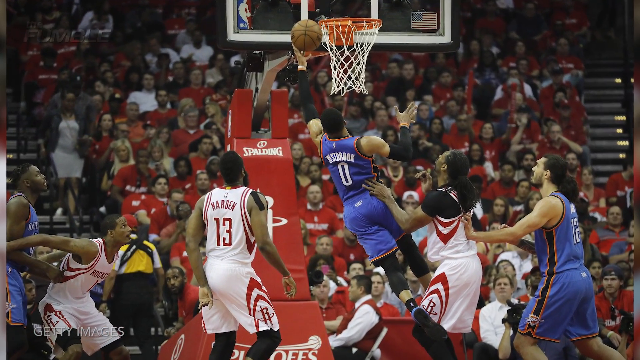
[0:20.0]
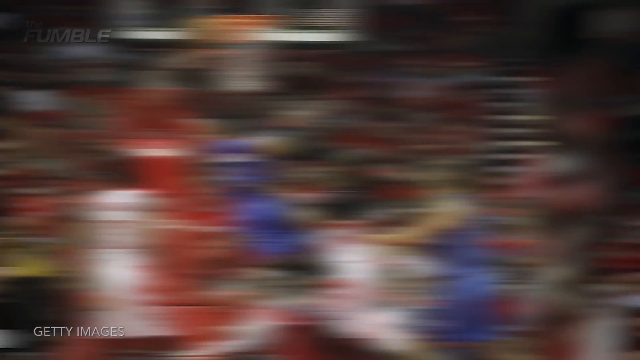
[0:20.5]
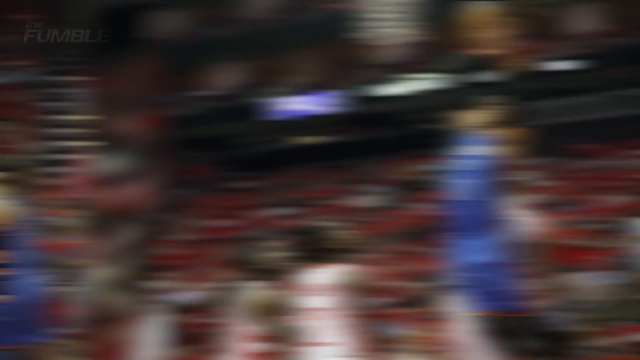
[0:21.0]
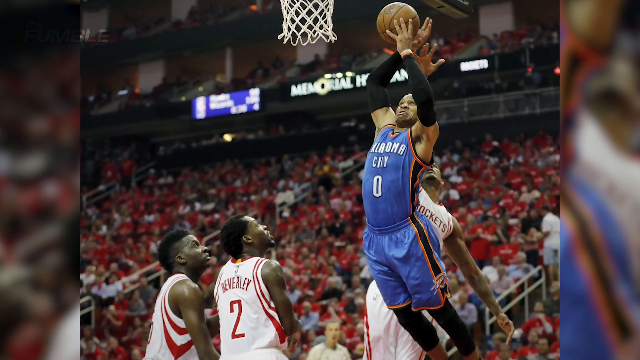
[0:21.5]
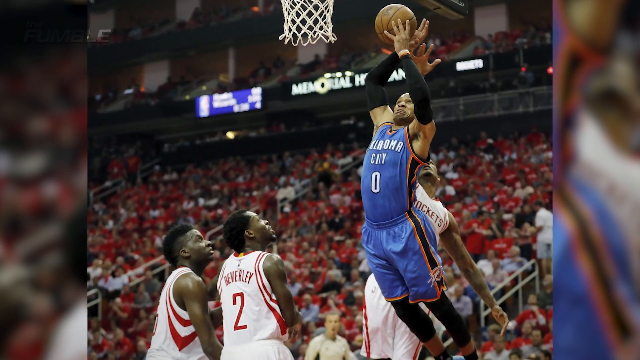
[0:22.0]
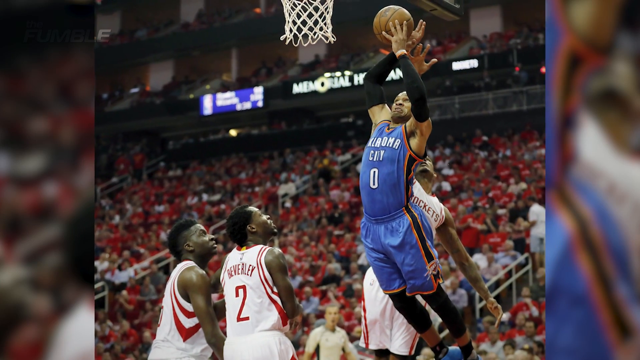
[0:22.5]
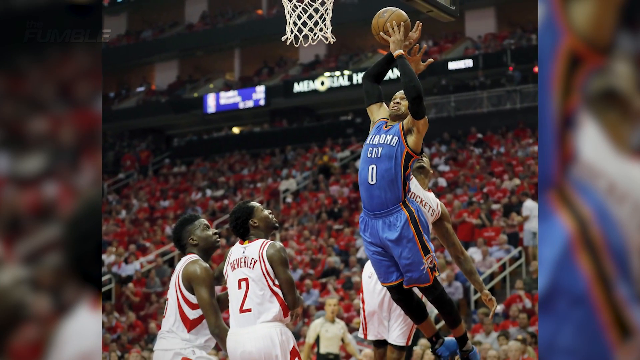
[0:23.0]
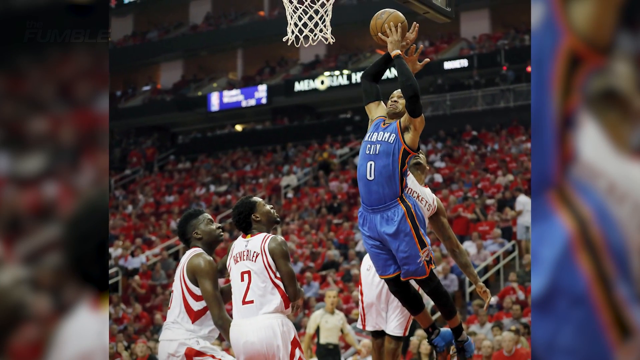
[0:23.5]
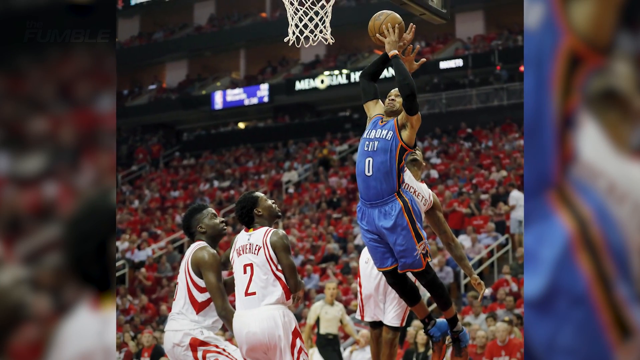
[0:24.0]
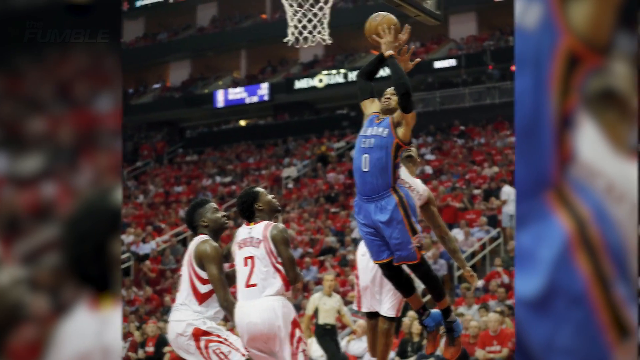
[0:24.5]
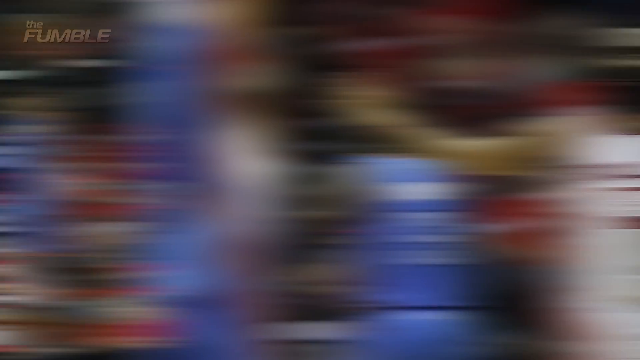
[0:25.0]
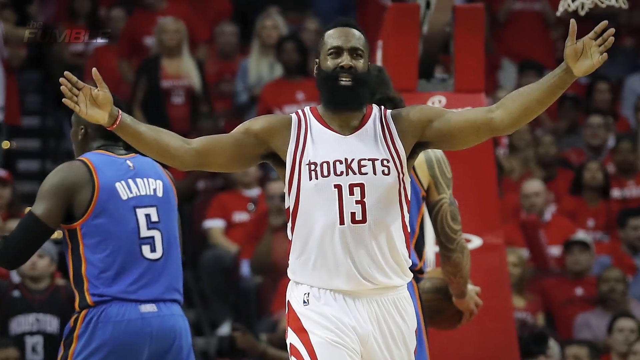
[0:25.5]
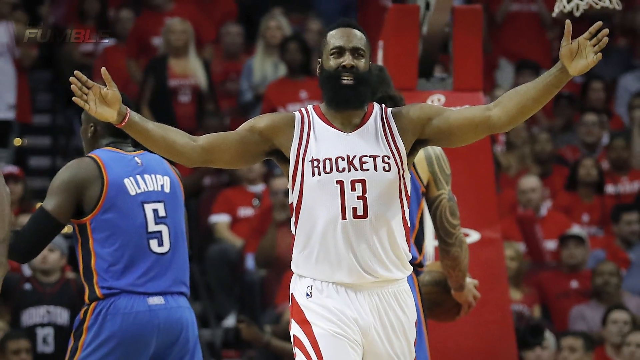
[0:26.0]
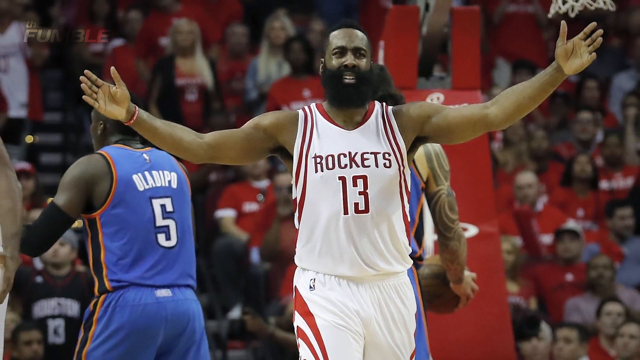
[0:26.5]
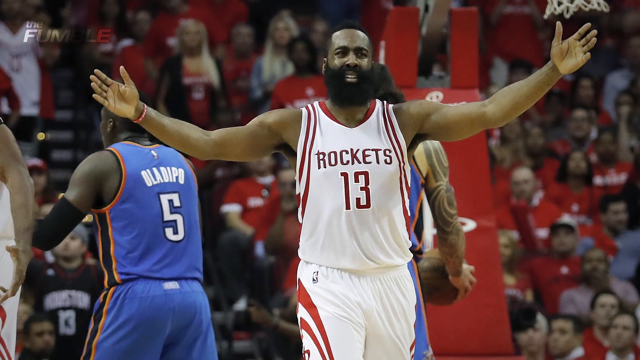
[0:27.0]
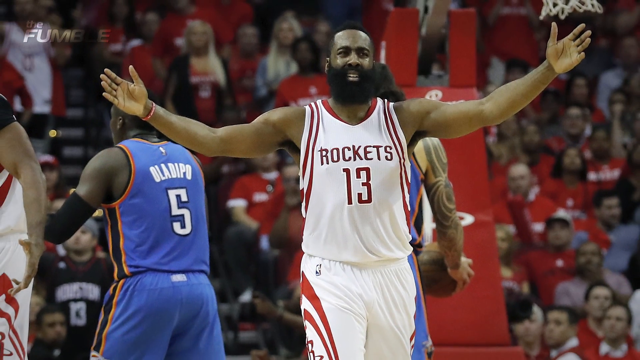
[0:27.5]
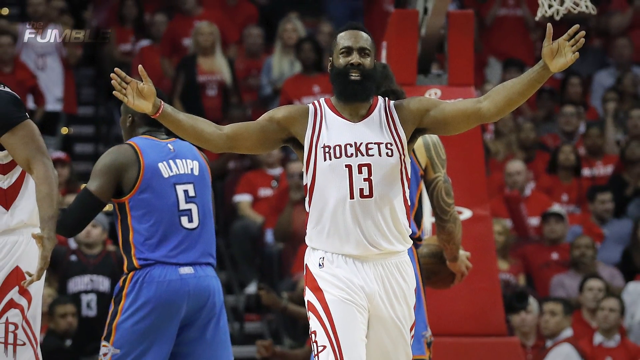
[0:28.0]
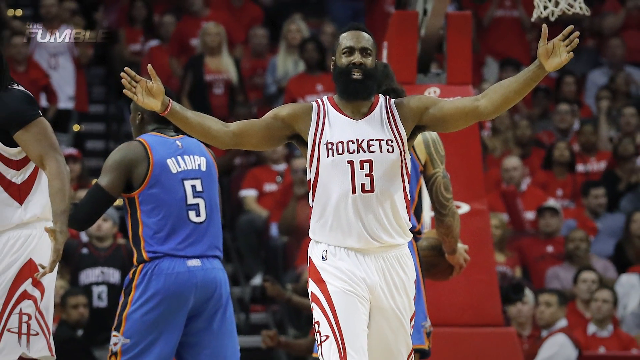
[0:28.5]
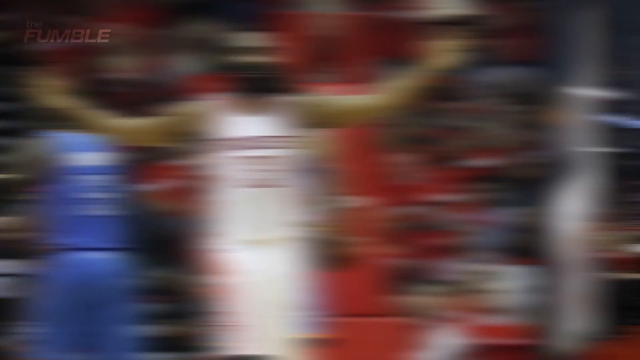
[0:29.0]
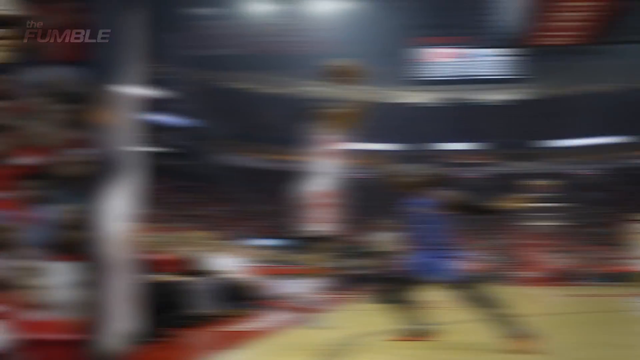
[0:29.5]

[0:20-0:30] Images from several points of the game are shown. First, Oklahoma City's number 0 tries to score a very complicated basket, and then players from the Rockets appear frustrated as he scores. Rockets player number 13, Harden, is singled out. The Oklahoma City number 0 appears in several of the images, close to the basket or scoring.